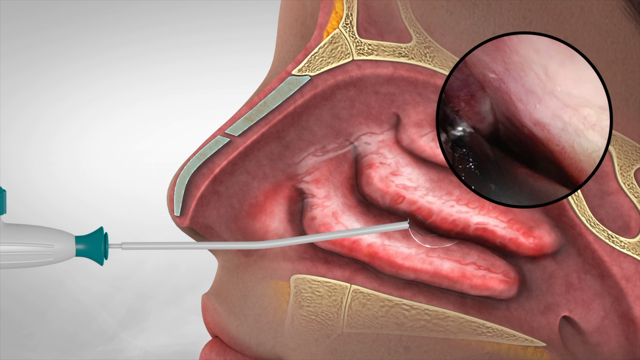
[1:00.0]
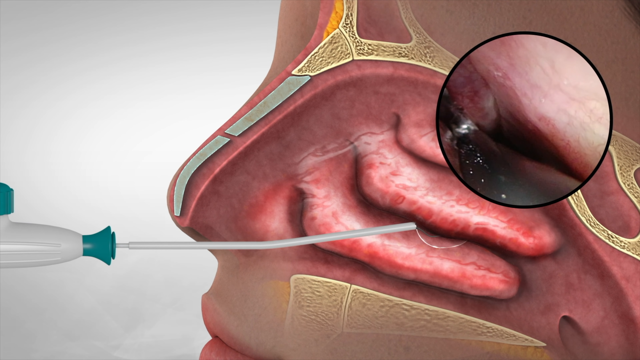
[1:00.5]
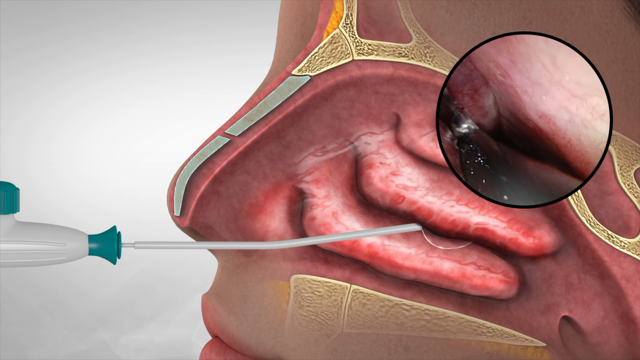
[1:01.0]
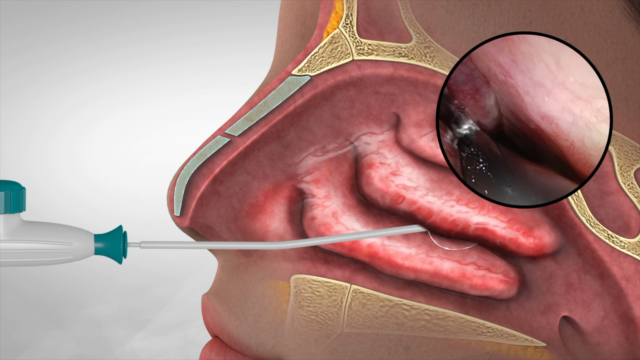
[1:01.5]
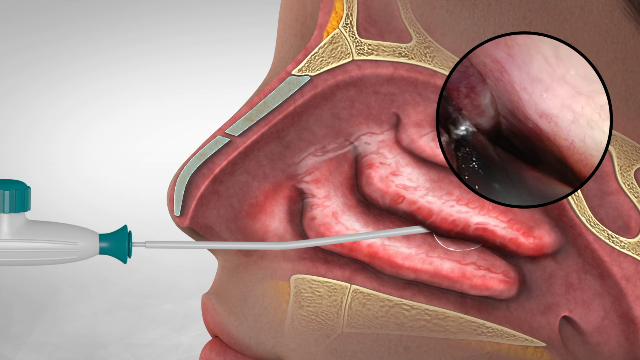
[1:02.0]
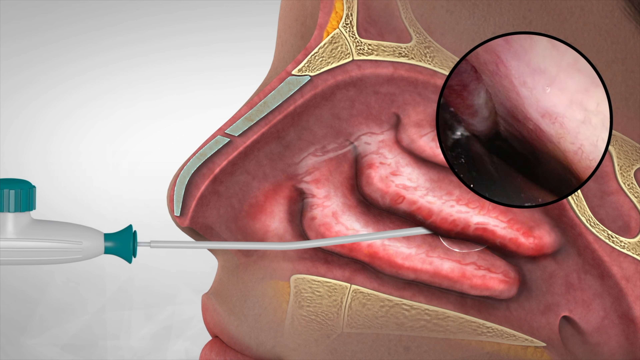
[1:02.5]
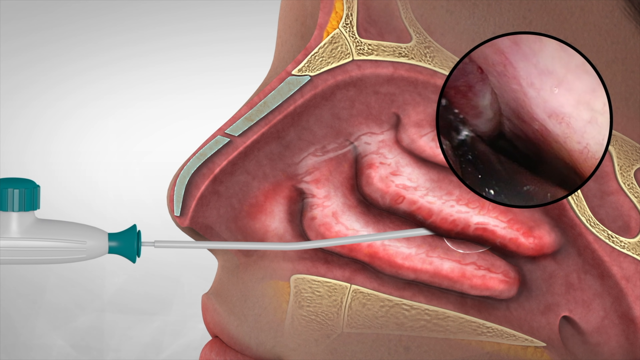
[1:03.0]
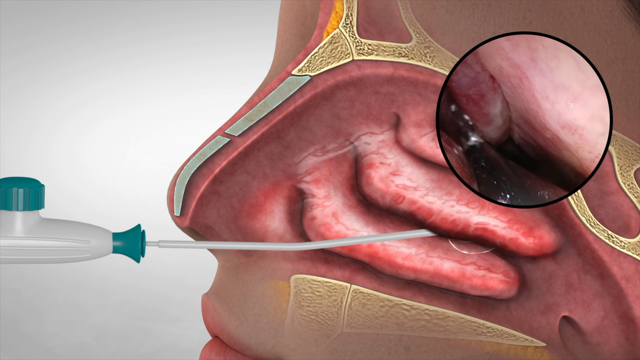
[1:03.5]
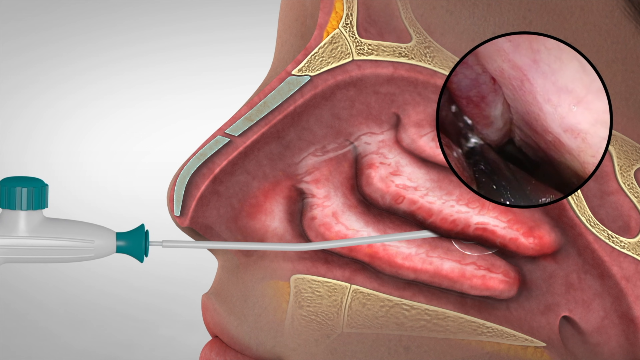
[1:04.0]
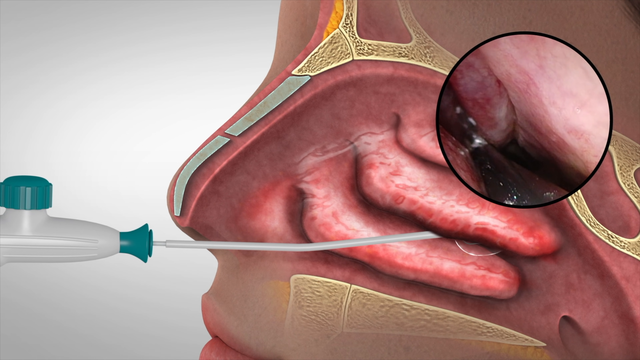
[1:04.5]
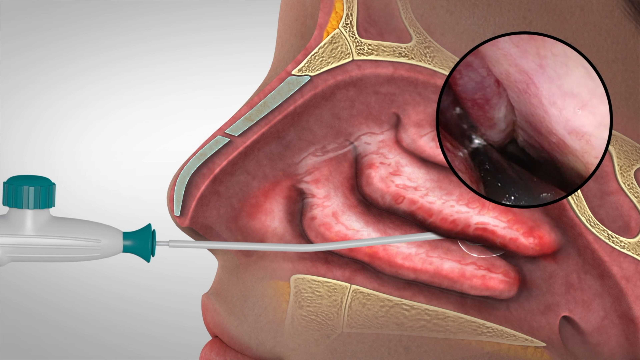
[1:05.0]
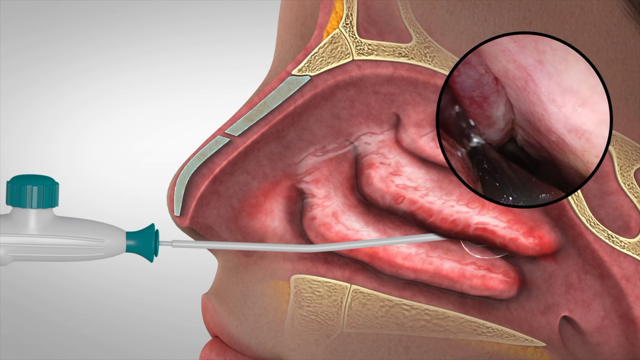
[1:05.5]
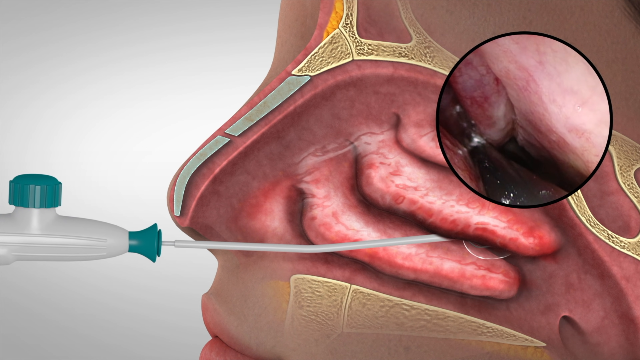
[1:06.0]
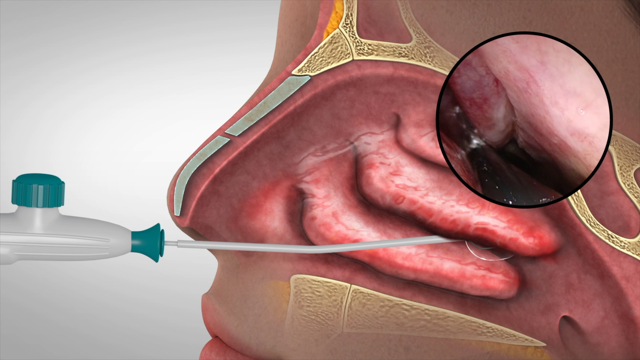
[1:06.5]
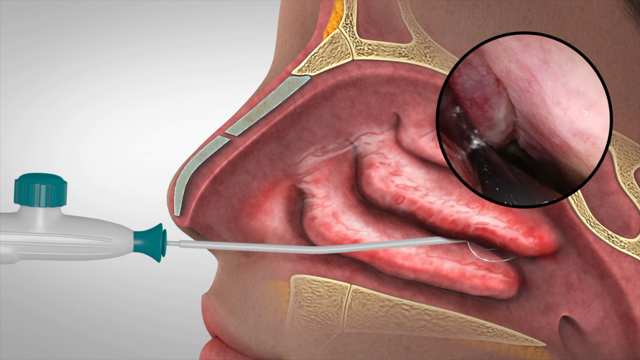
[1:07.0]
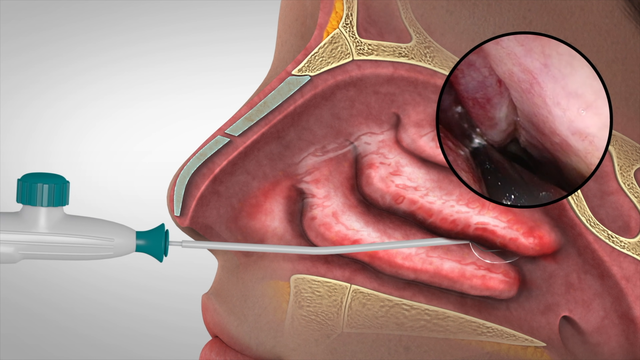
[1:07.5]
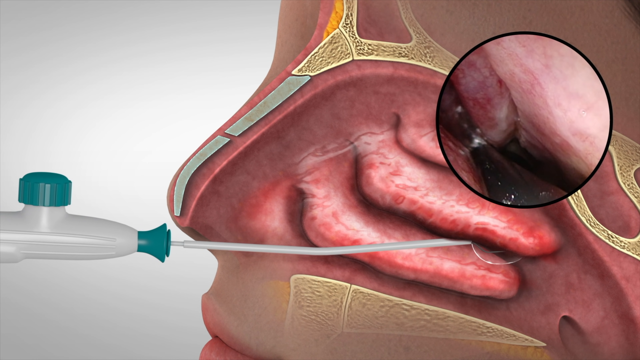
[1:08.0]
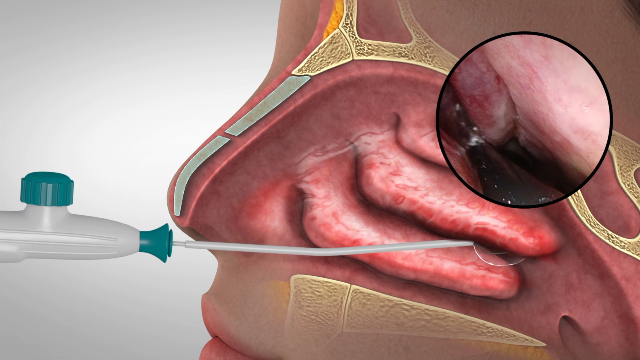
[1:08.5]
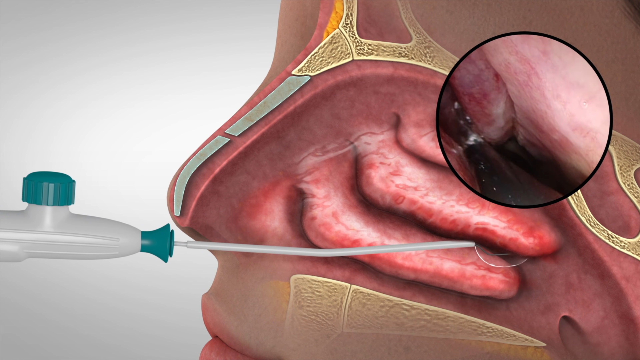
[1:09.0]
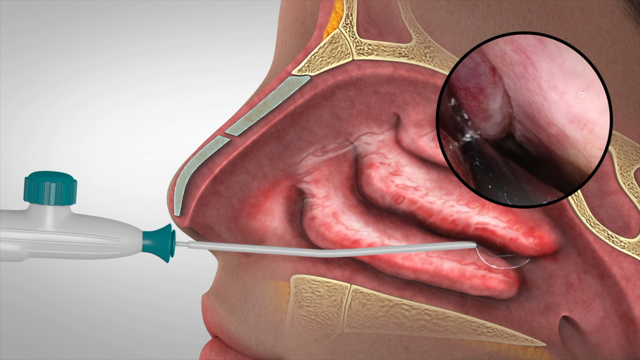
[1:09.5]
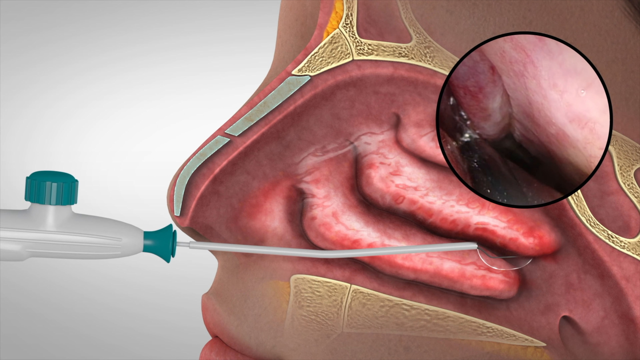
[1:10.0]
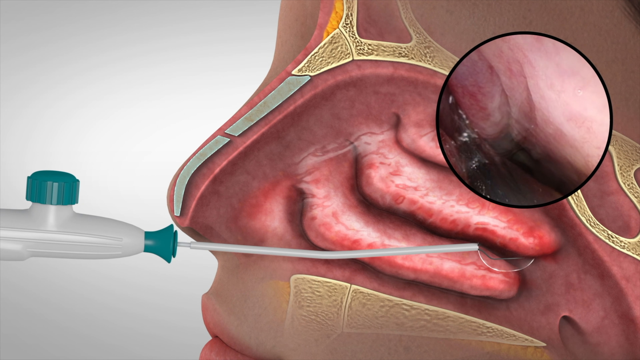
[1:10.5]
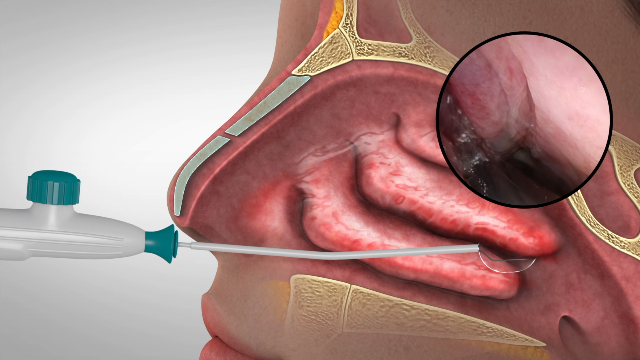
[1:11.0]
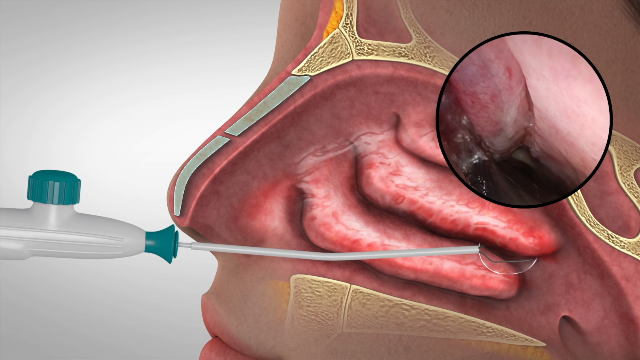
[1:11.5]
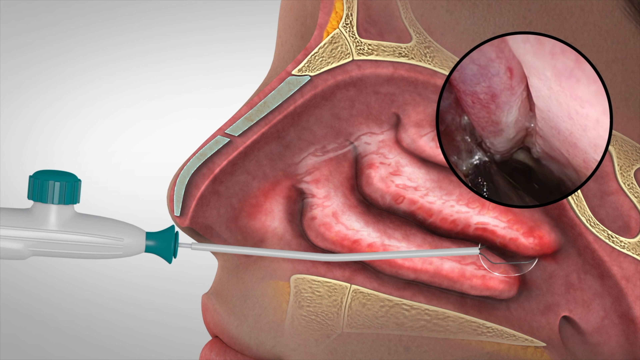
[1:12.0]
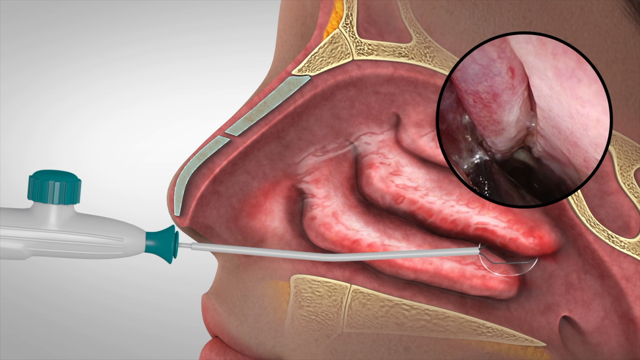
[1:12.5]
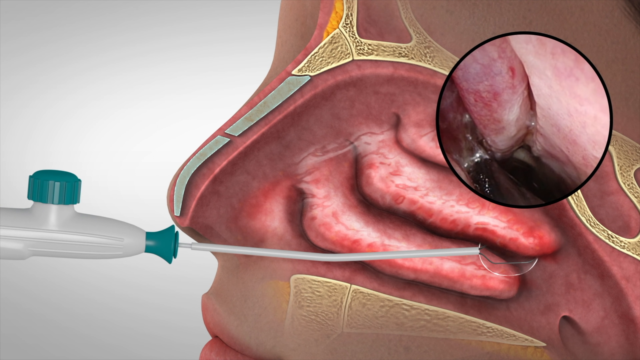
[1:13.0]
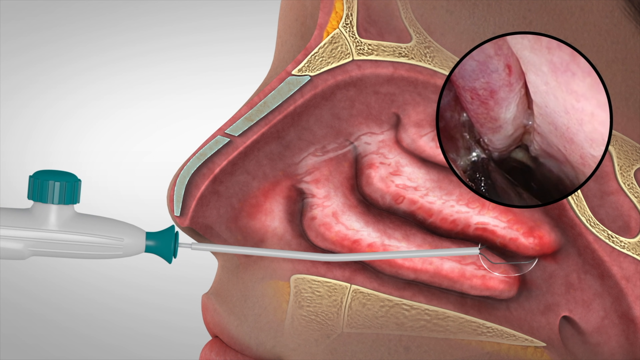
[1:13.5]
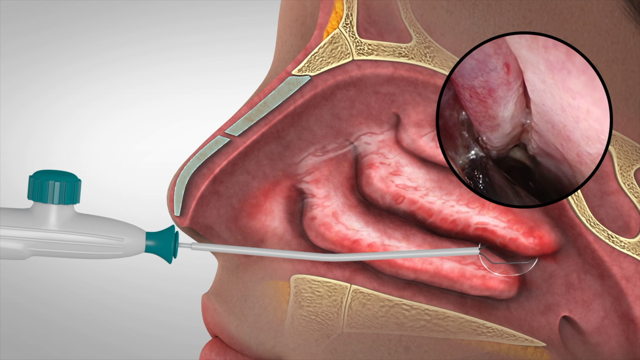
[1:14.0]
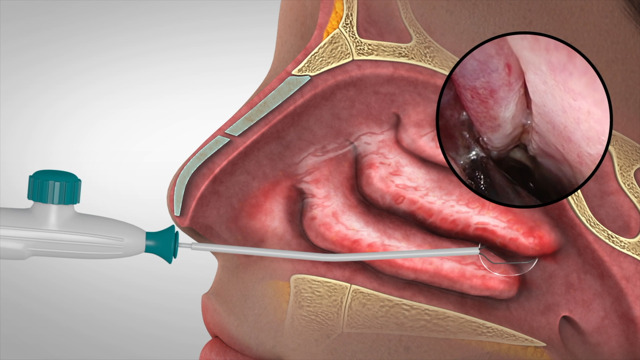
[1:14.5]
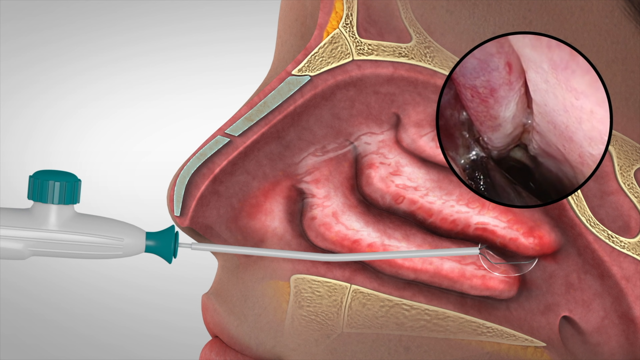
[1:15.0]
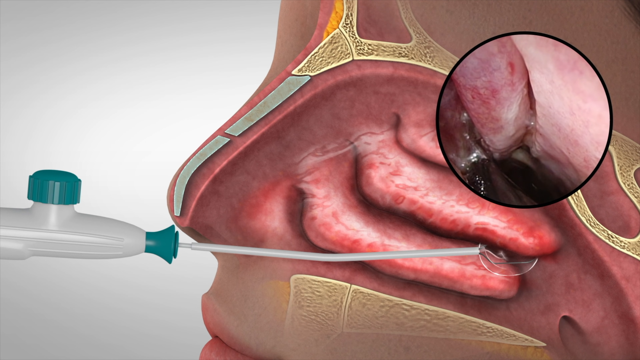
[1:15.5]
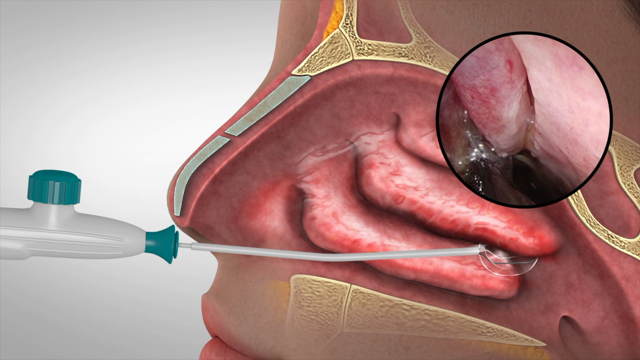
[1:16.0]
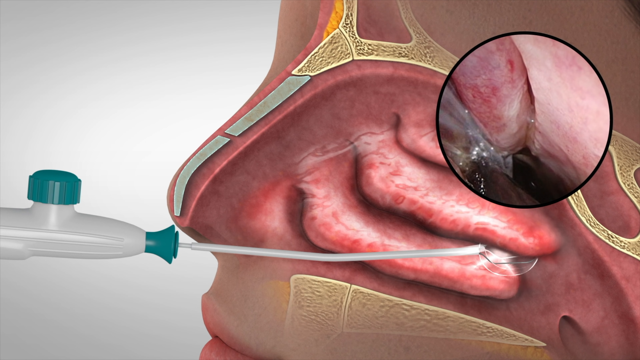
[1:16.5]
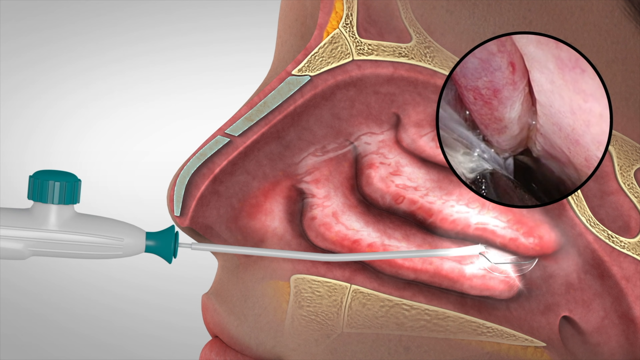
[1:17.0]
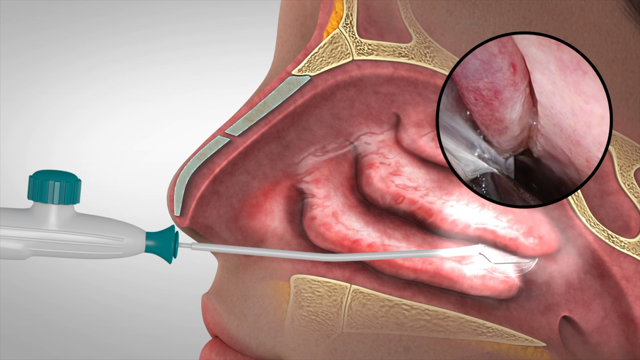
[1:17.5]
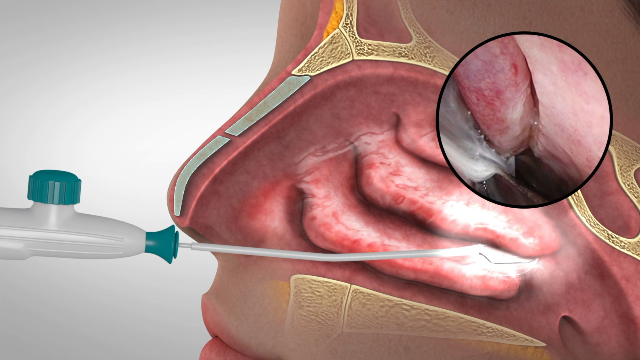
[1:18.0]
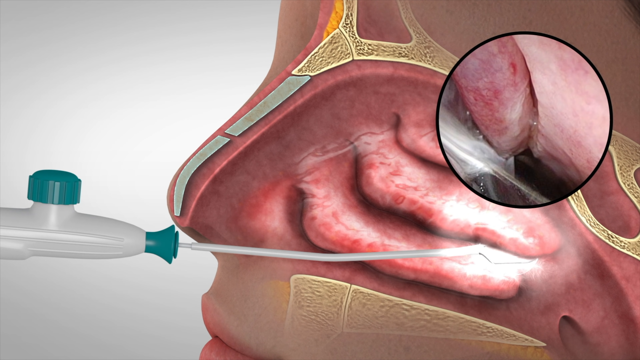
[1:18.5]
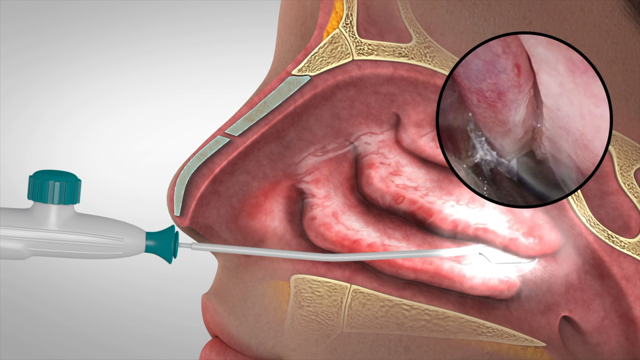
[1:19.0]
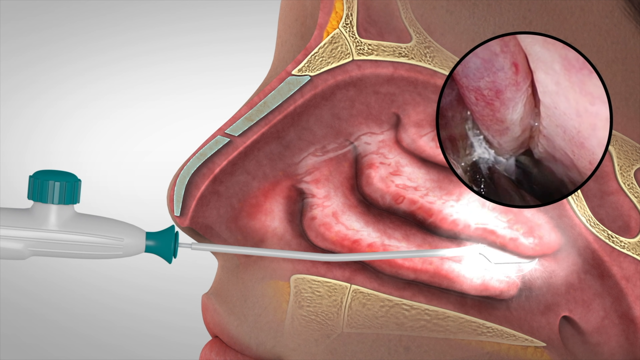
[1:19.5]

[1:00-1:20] The camera view continues through the nasal cavity, giving a decently clear picture of the inside of the nose. Using the Clarifix product, water or a saline solution of some sort seems to be flushed through the tube to the back of the nasal cavity and passage. There is quite a bit of dripping and streaming water, apparently going through that tube. Only a very small portion of the actual Clarifix device is visible.